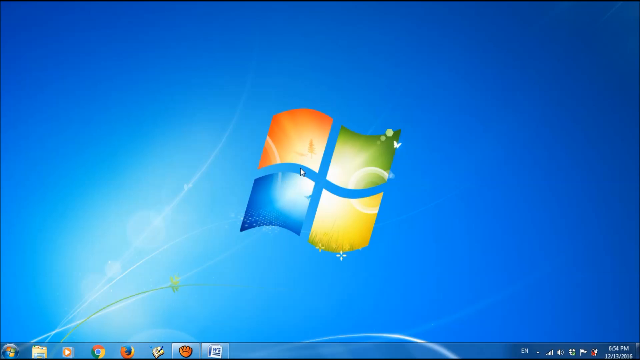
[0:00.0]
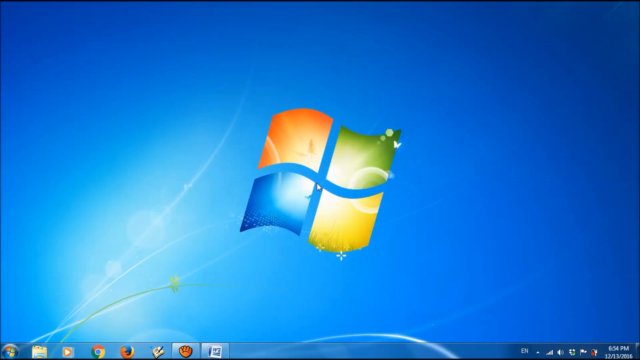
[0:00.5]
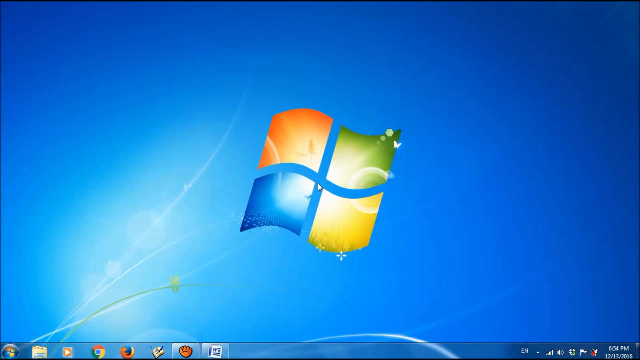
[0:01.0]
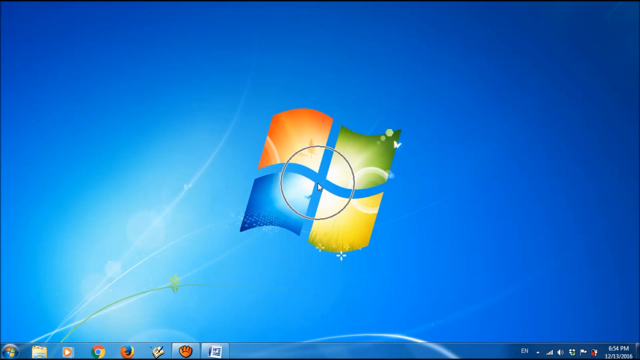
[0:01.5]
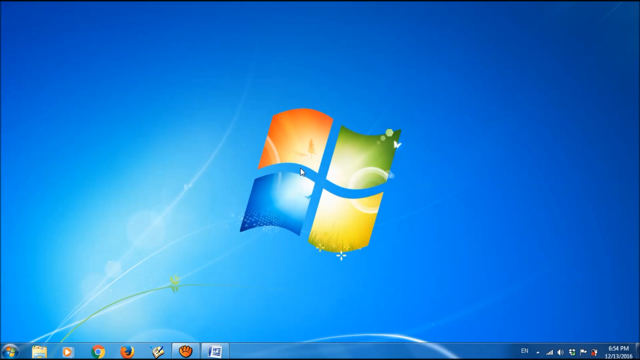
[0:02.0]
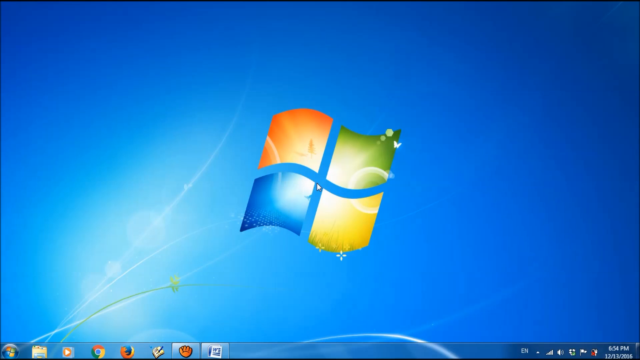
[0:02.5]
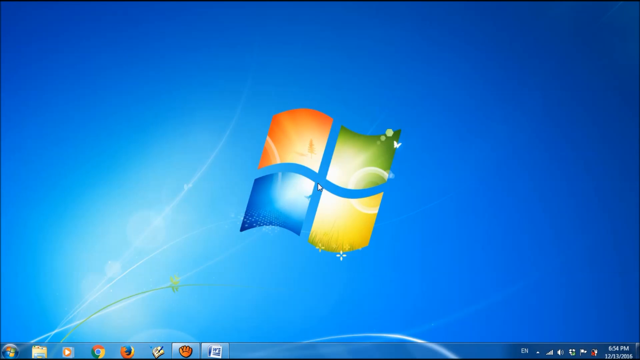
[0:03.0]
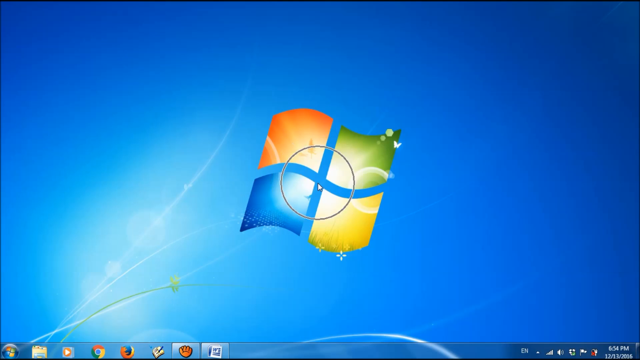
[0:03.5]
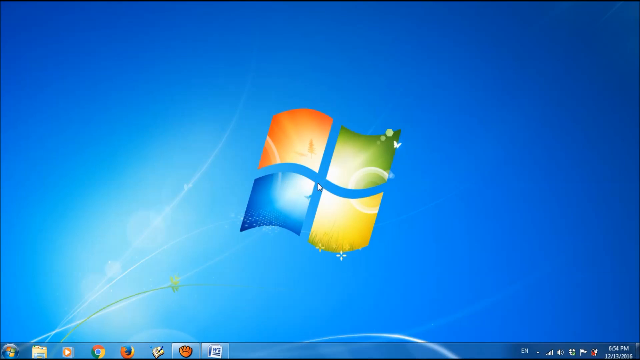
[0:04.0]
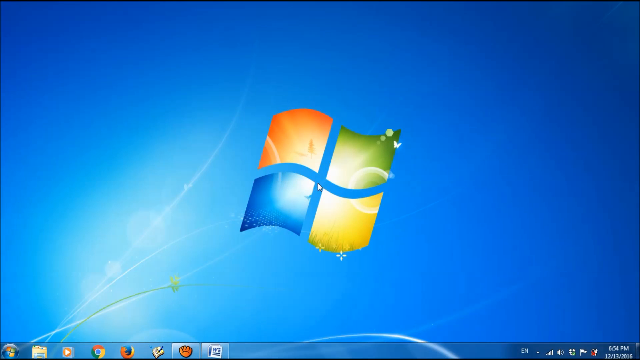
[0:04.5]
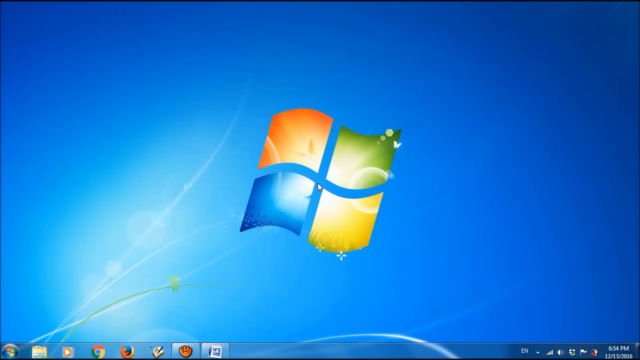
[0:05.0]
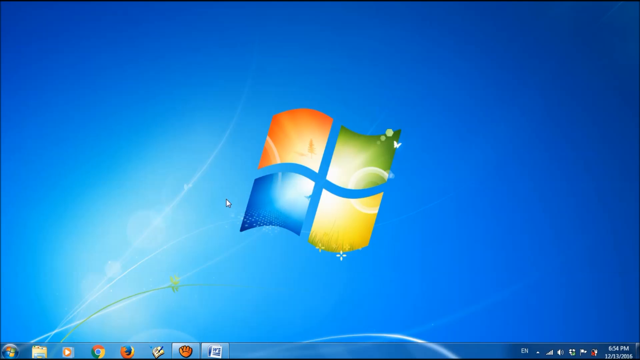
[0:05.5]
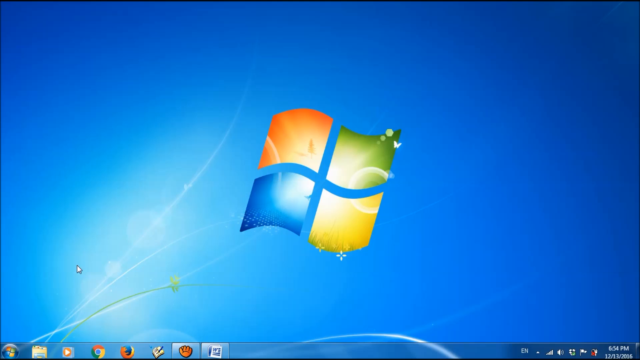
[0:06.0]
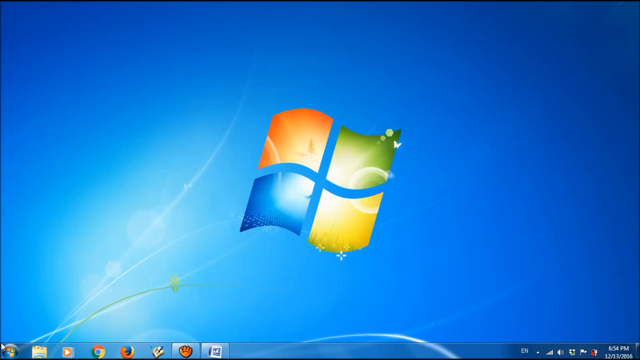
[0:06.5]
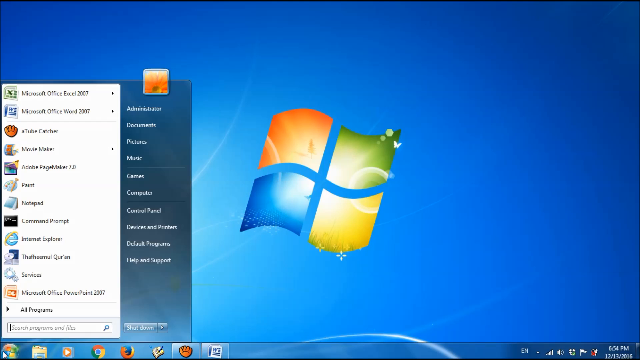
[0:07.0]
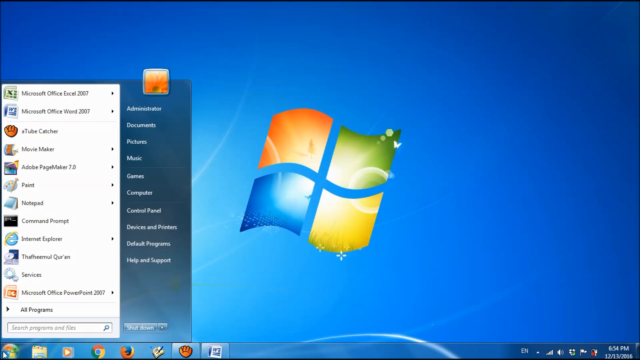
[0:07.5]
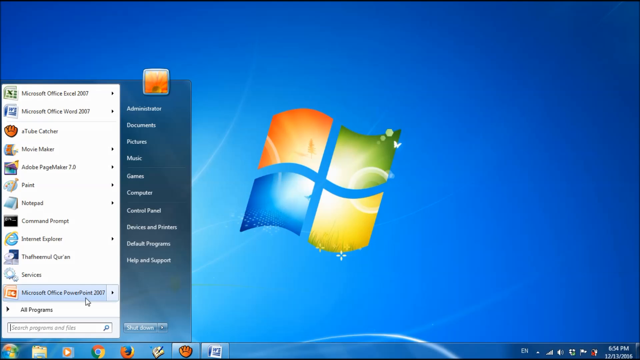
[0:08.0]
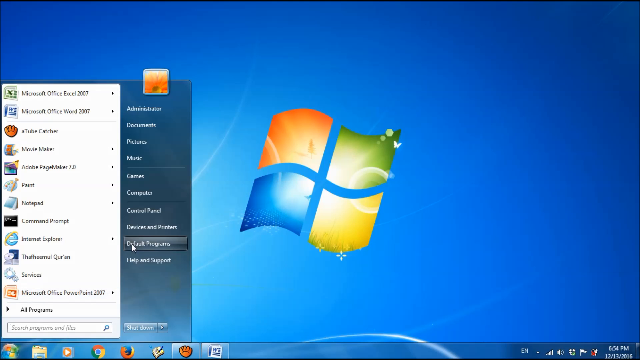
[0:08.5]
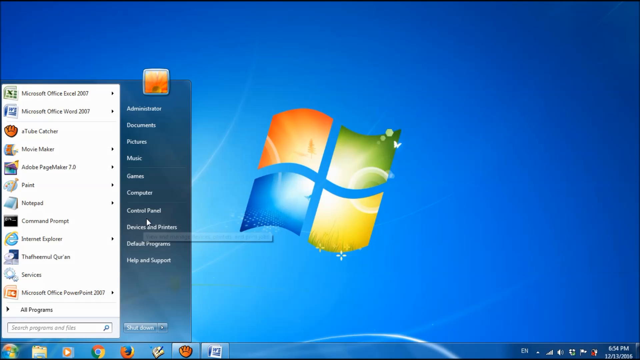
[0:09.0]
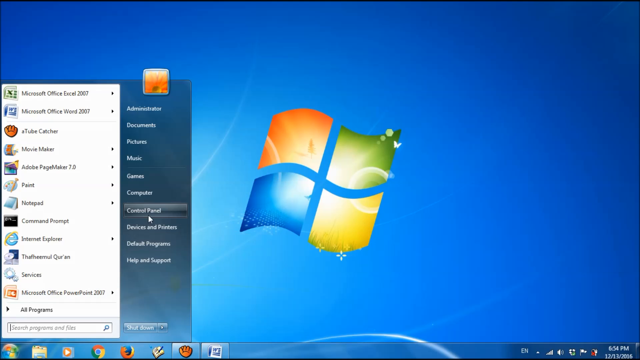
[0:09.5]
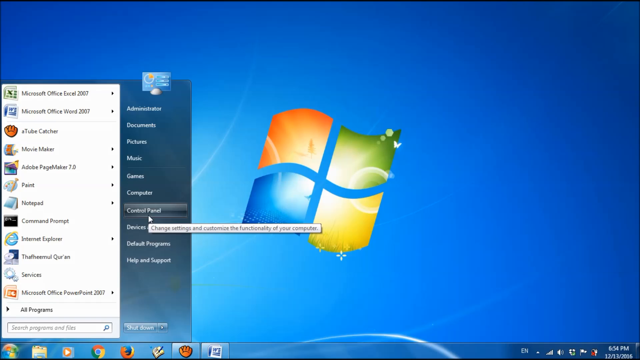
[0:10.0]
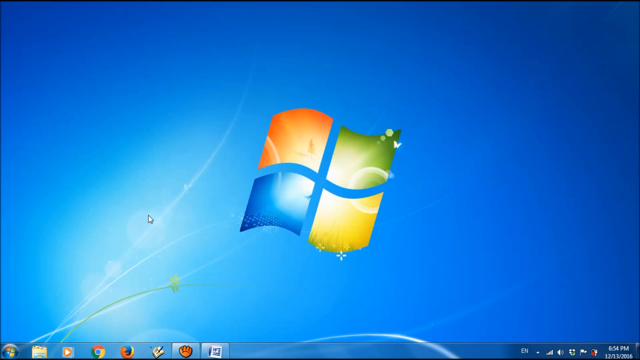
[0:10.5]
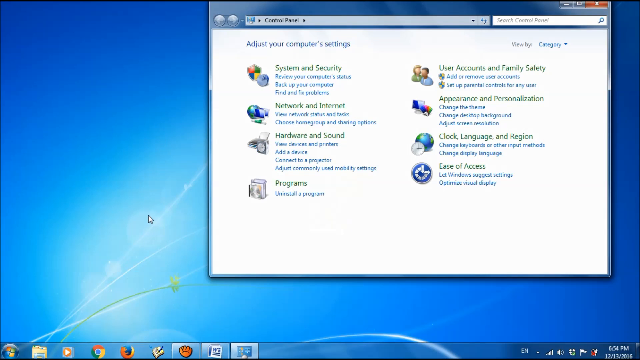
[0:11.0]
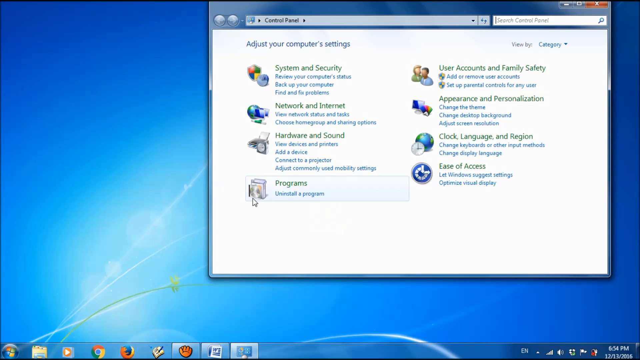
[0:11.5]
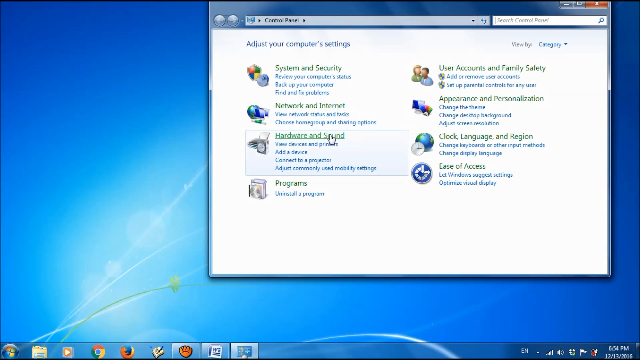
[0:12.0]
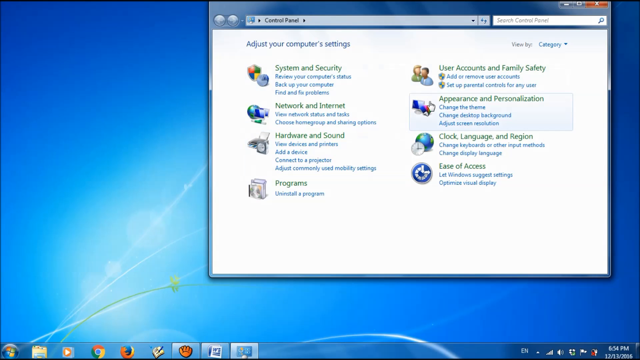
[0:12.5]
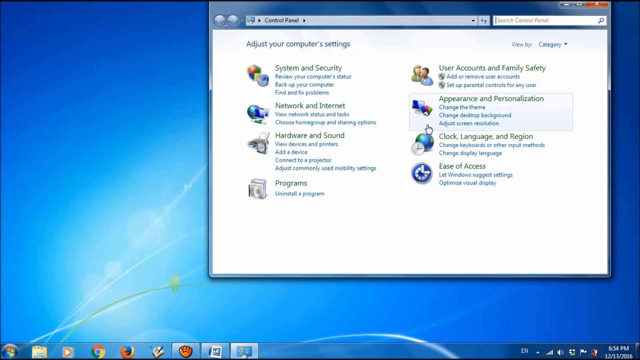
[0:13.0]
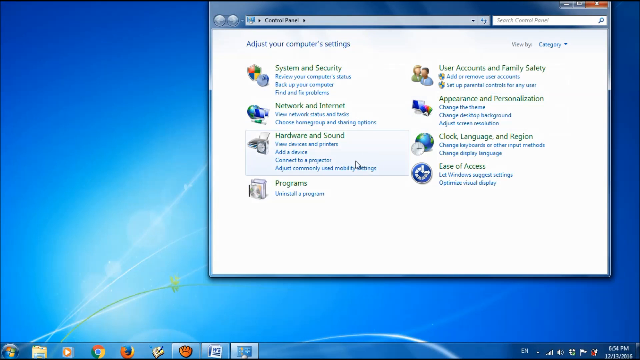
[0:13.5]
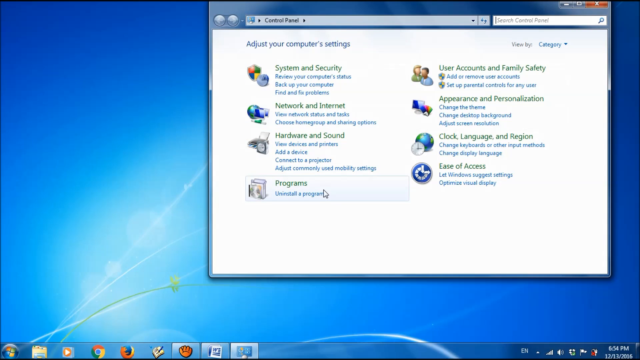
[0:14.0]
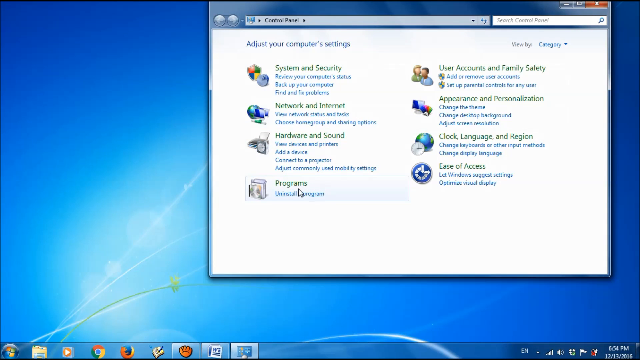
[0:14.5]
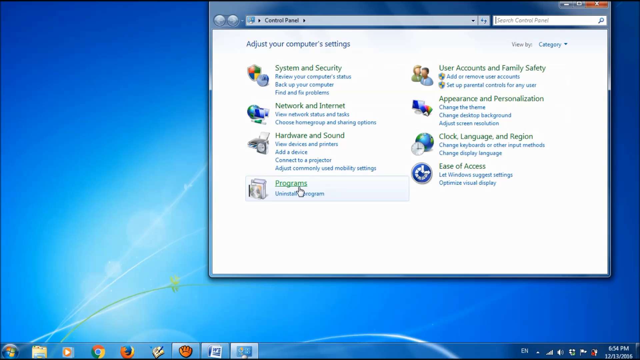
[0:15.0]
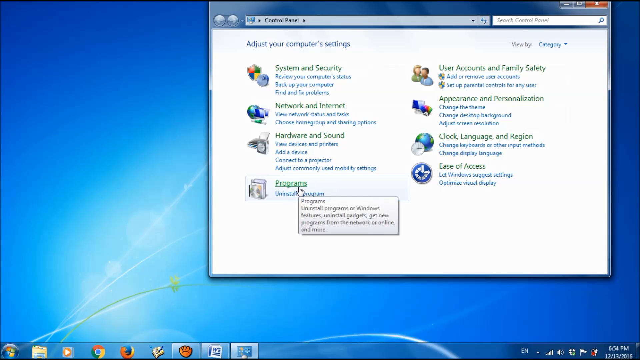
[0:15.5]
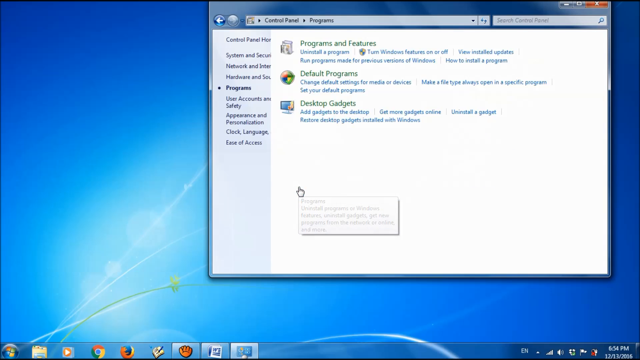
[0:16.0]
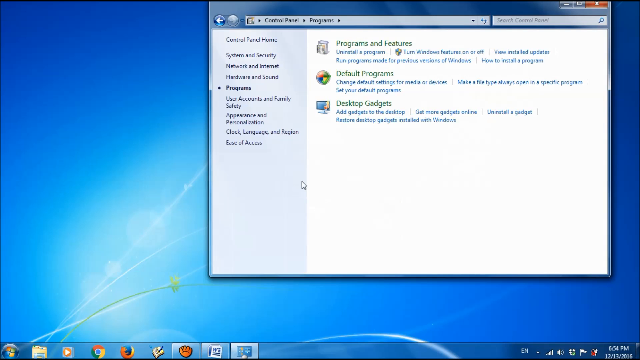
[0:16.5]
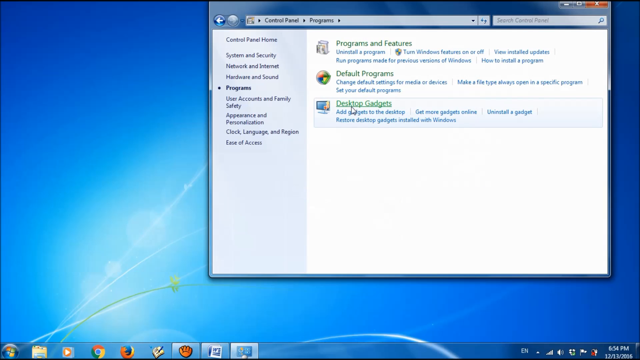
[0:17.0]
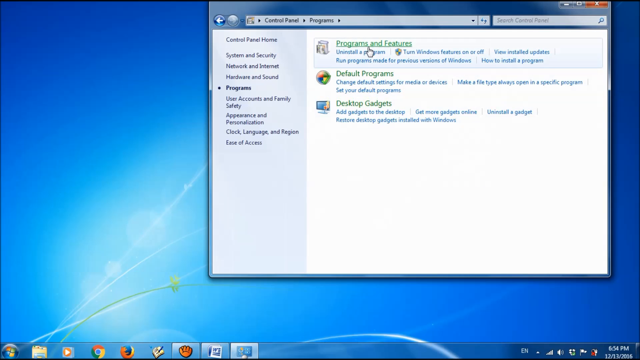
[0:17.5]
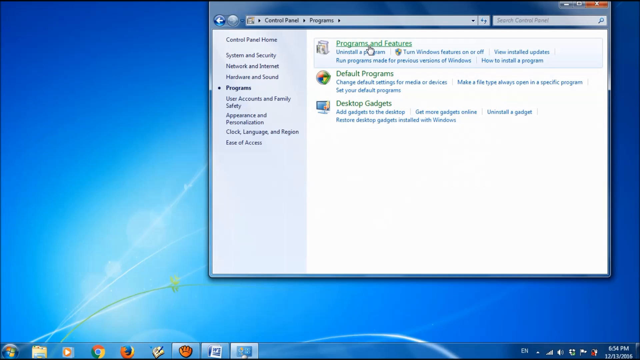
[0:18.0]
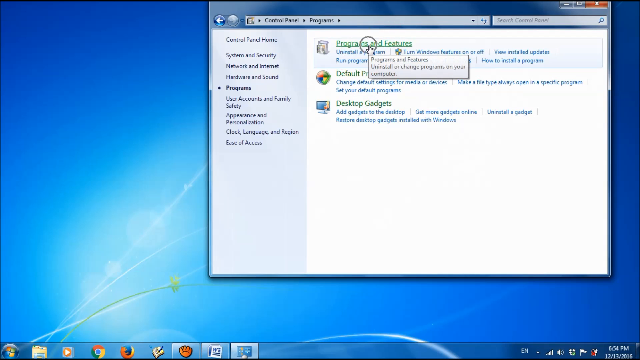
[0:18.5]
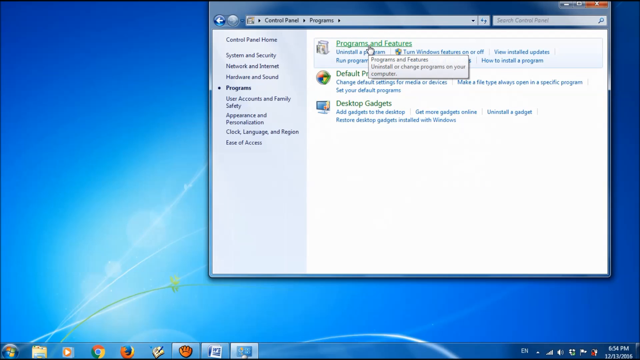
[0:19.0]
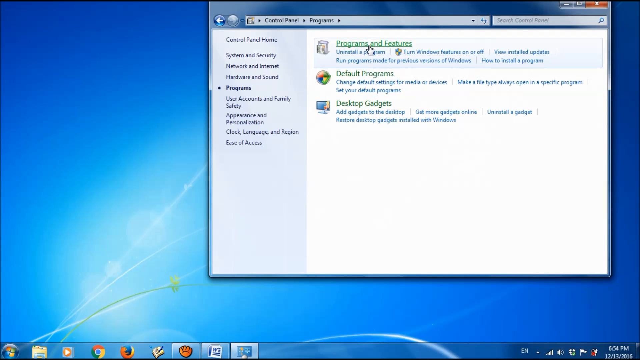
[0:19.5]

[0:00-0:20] The video begins with the Microsoft Windows screen: a blue background with the Windows logo, made of red, green, blue and yellow squares, in the middle of the screen. The Windows taskbar is at the bottom, and the desktop appears to have Chrome and Firefox on it, along with the Windows Start key. The mouse moves down to the Start key and clicks it, then goes past Microsoft Office PowerPoint without clicking it. It moves over to the Control Panel link and clicks it, bringing up the Control Panel. The cursor hovers over the different sections one at a time, then apparently settles on programs and clicks the programs link, which brings up a page called programs. From there it goes to a section called programs and features and clicks on it.